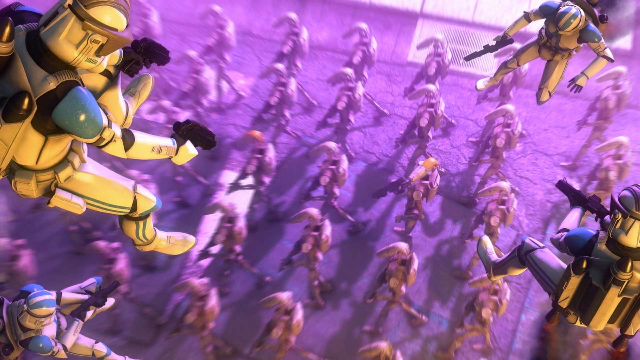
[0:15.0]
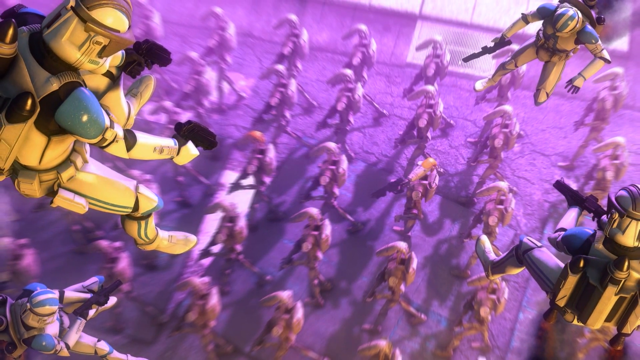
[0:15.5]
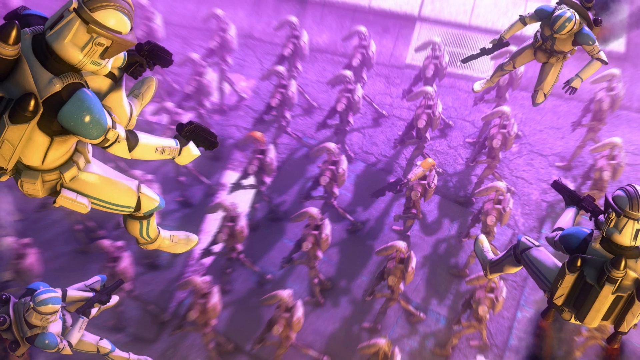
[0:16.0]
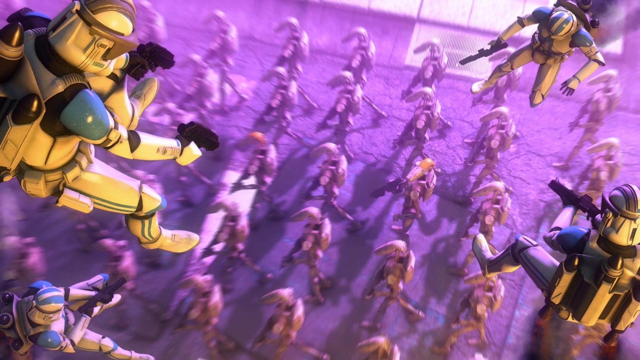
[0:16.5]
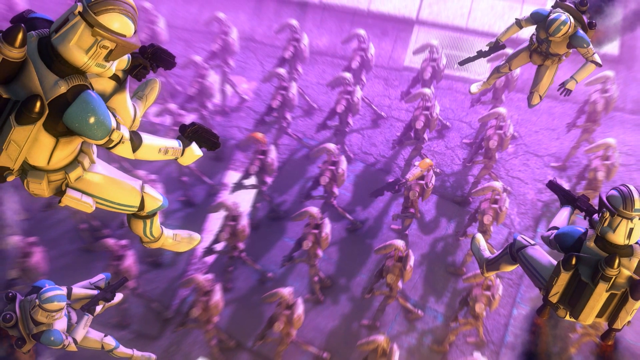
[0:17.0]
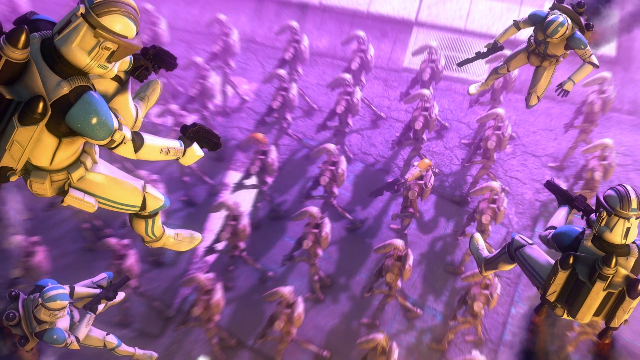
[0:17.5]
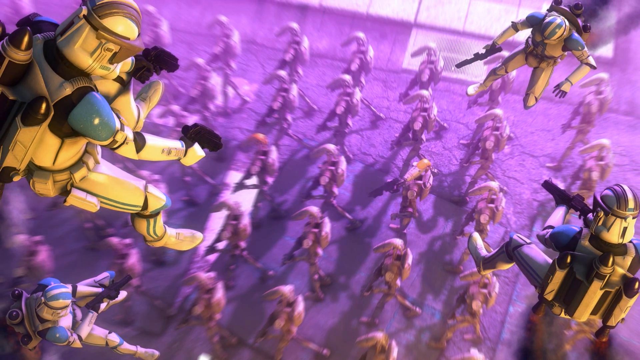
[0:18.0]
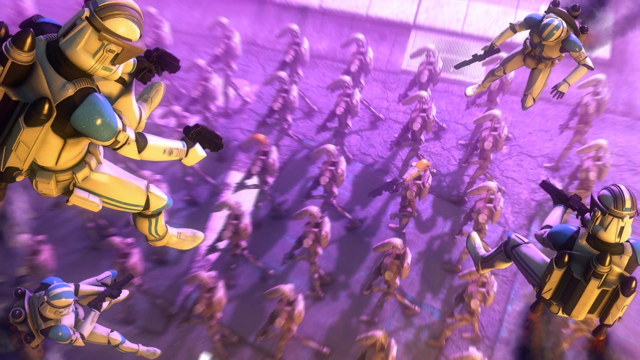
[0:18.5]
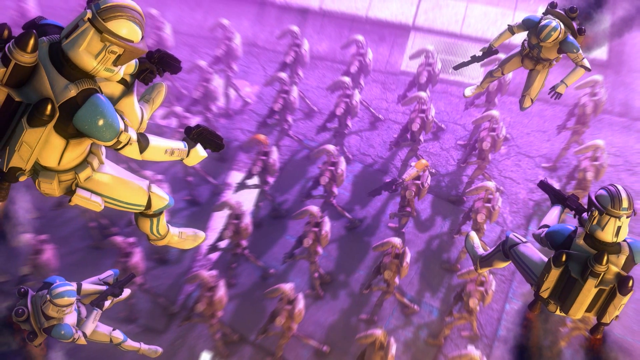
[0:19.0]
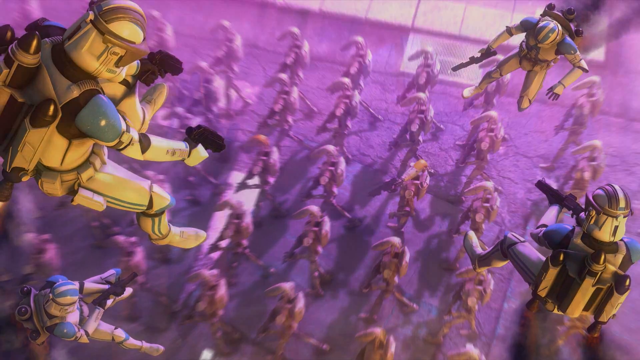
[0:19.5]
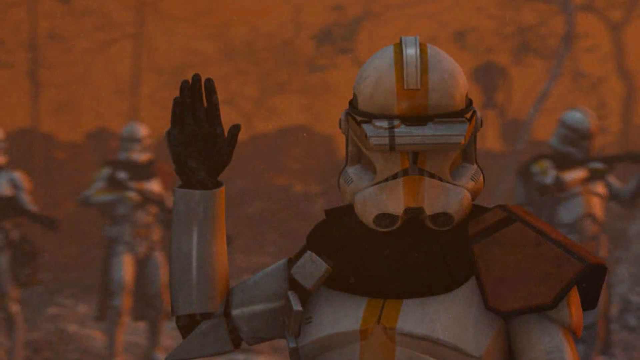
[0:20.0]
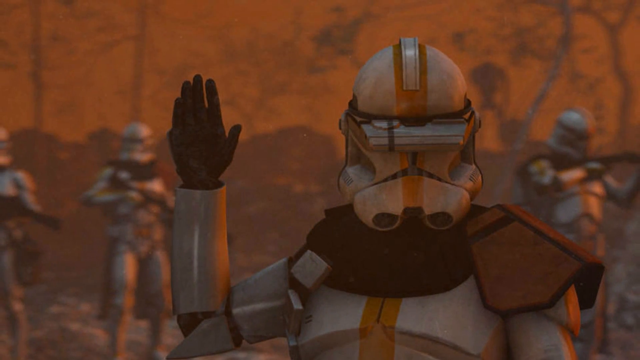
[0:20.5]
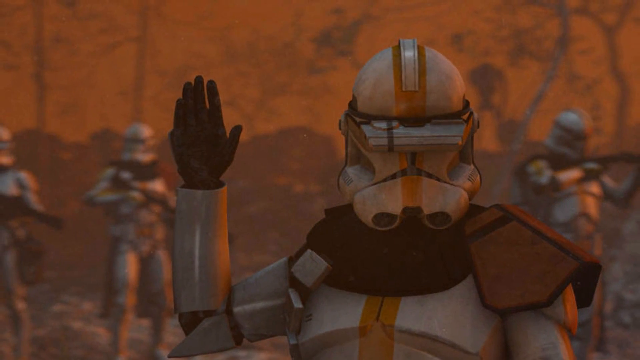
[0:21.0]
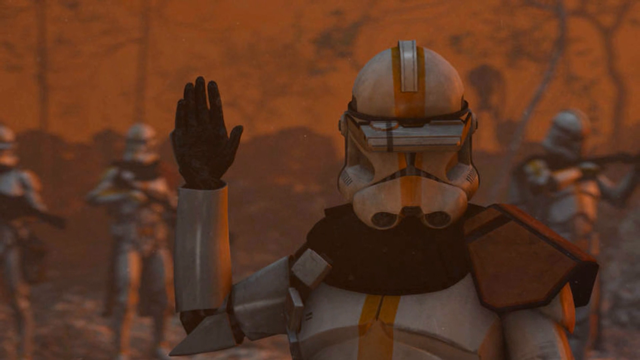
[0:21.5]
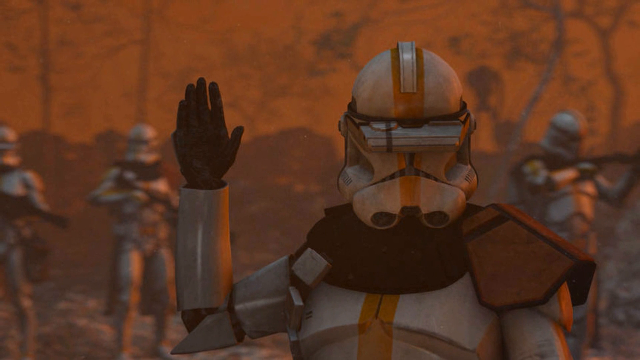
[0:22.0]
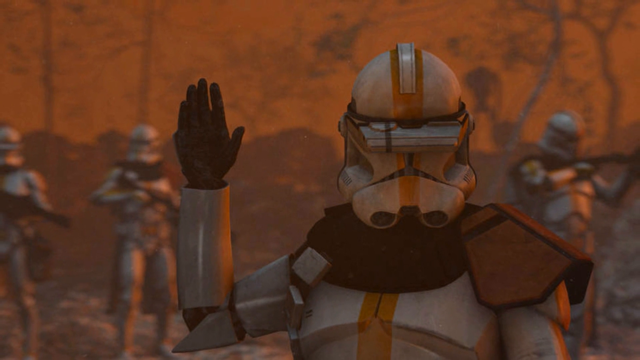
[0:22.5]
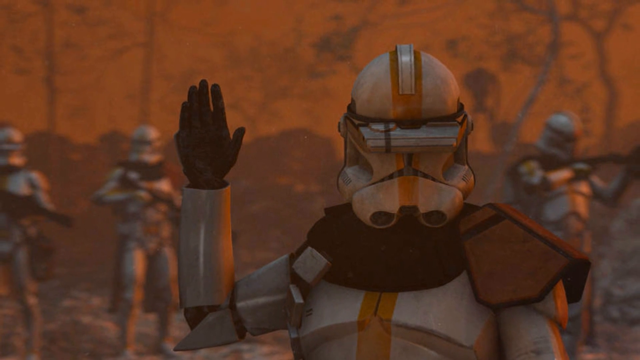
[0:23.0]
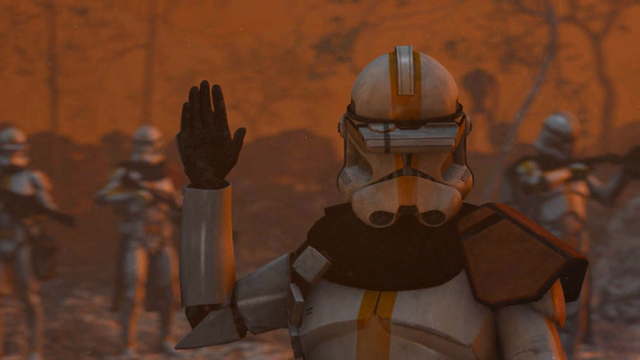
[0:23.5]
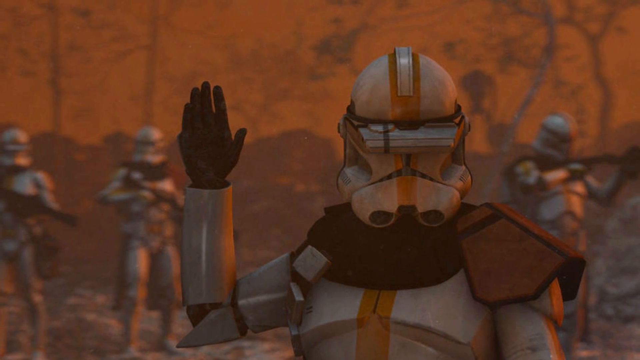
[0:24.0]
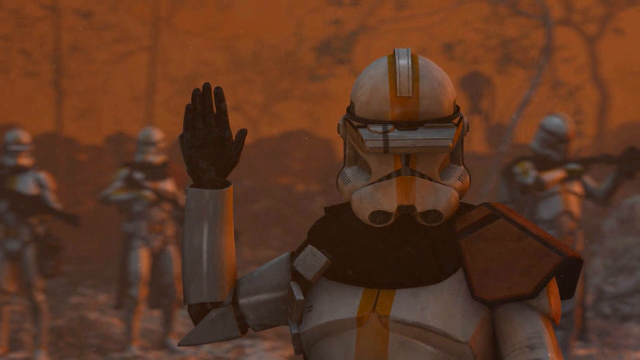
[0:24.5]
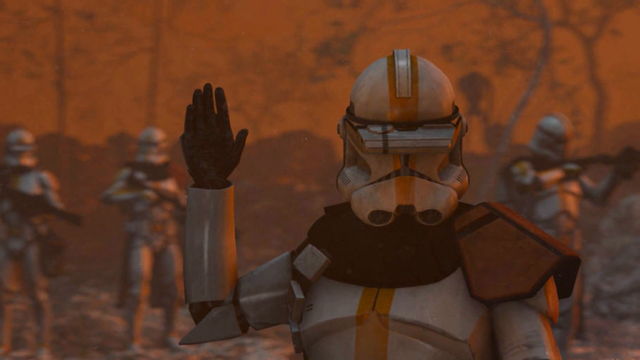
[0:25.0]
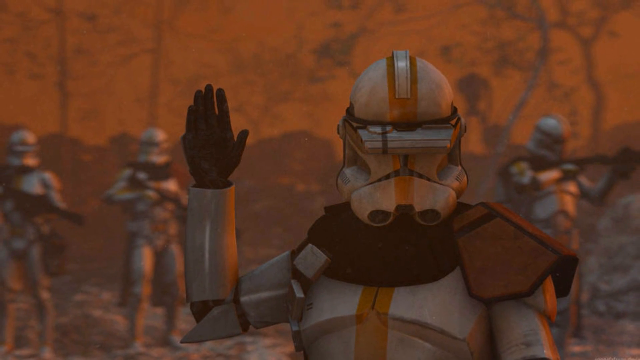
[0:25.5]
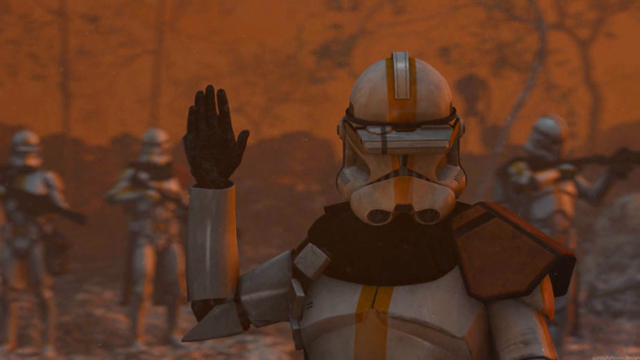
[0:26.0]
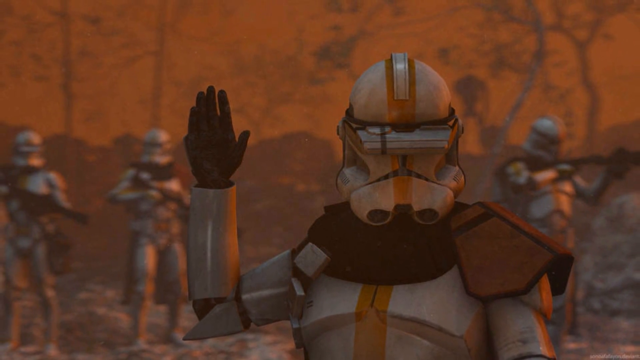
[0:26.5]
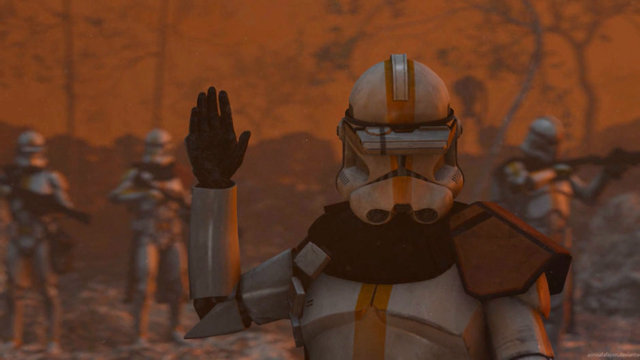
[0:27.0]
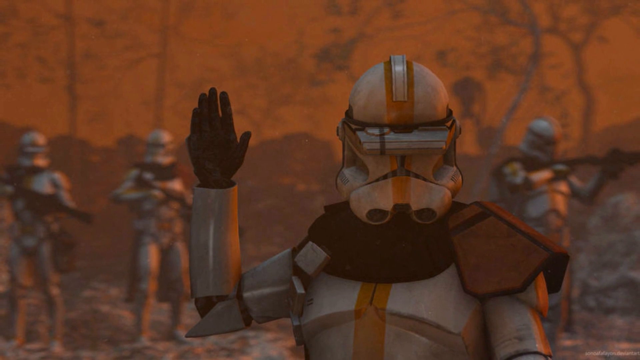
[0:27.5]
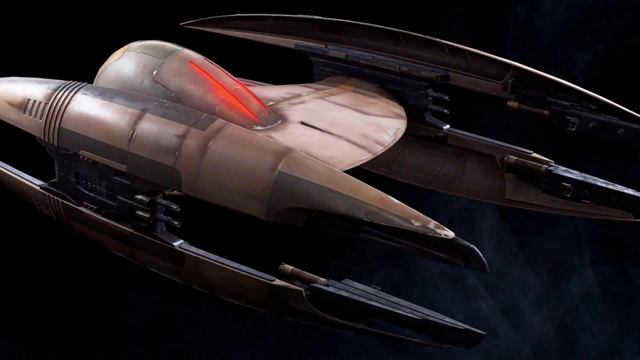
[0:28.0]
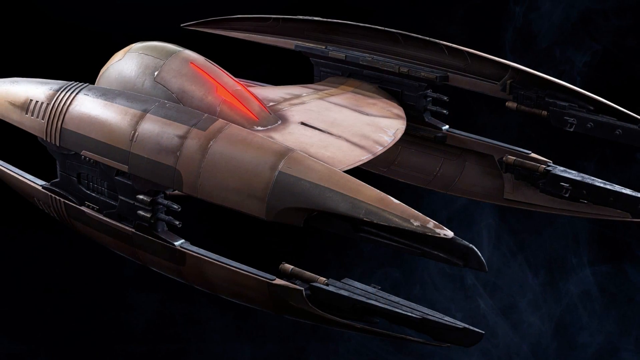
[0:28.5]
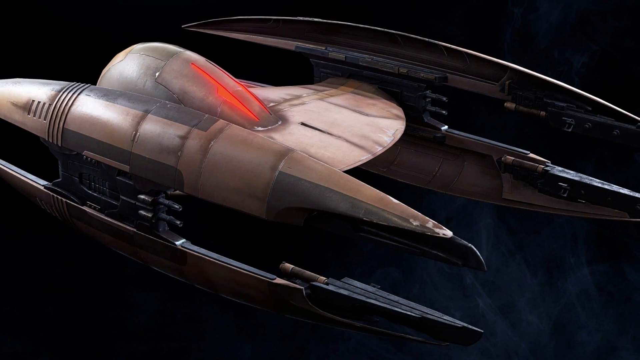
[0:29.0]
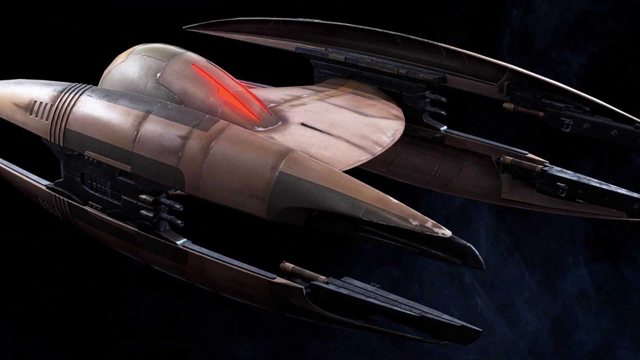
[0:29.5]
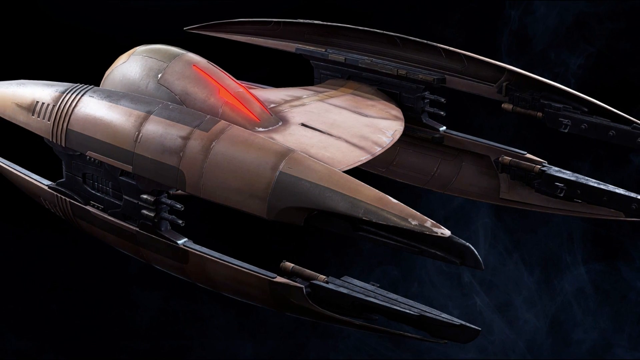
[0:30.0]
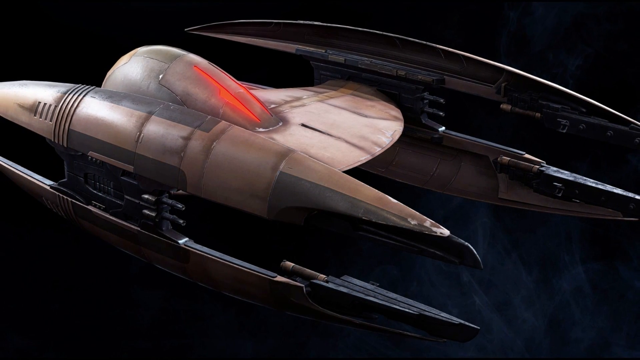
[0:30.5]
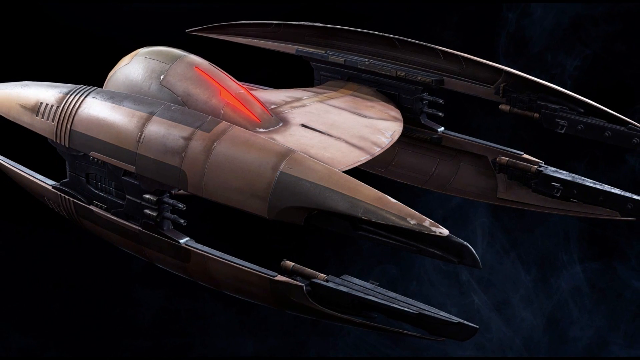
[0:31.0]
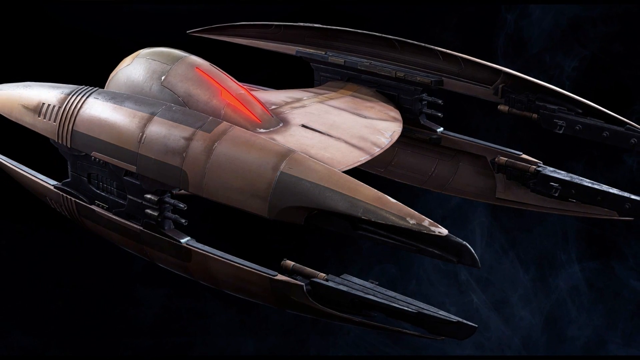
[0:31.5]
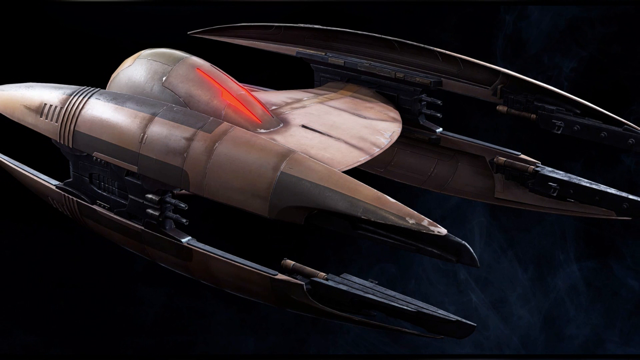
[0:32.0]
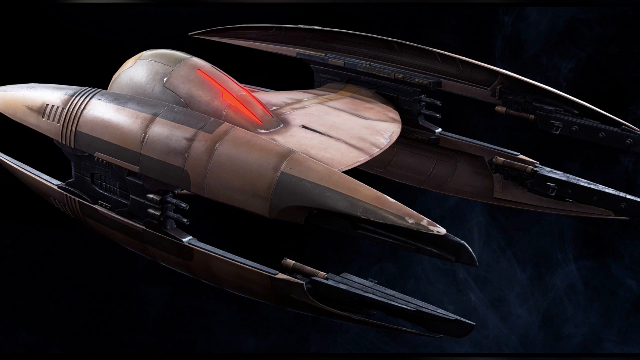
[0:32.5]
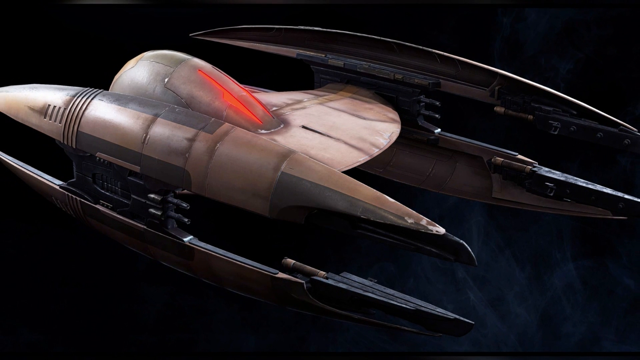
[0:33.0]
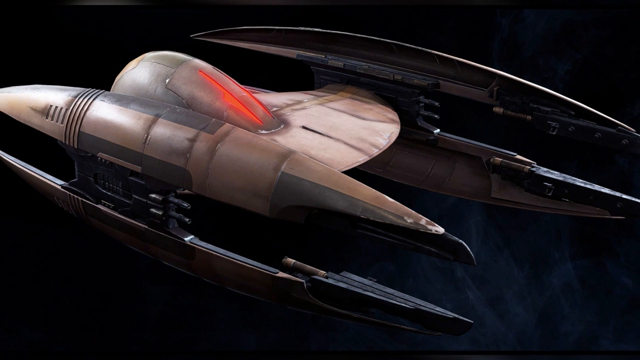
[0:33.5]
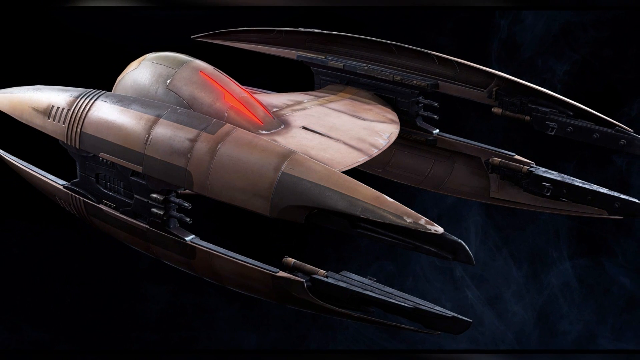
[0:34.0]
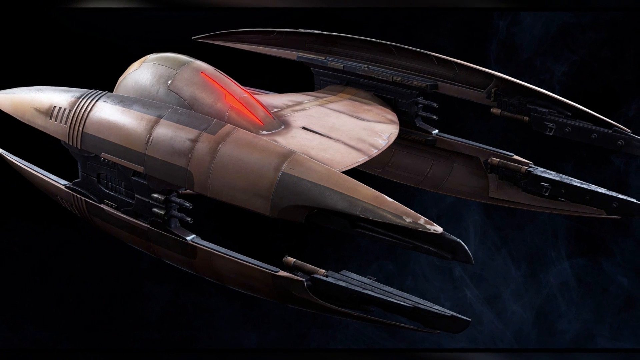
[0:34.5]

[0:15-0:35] Text indicates the content is from the EU, Expanded Universe. A smoky, hazy background appears, with one of the robot figures holding his hand up and facing toward the viewer, some blurred figures behind him. There seem to be some trees in the background. A close-up of what looks like a spaceship with red lasers and very sharp wings follows, set against a dark space sky. The video then returns to the earlier shot, where the close-up figure holds his hand up and appears to be rotating with the viewer. "Lore Master" appears in the bottom right.